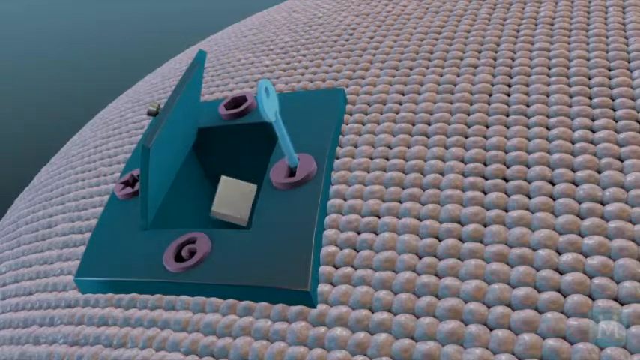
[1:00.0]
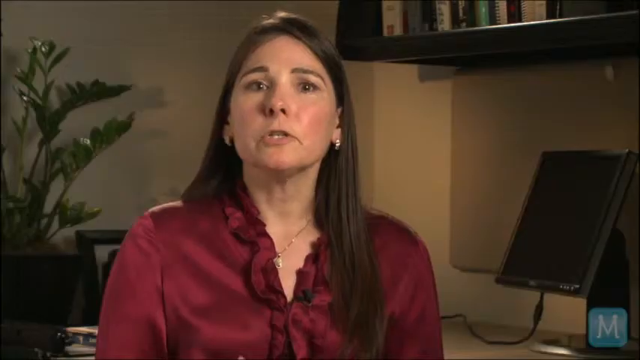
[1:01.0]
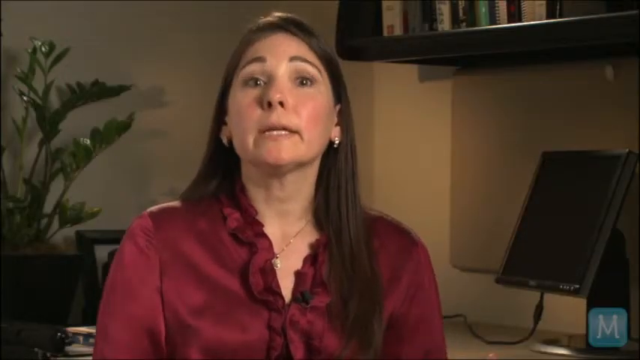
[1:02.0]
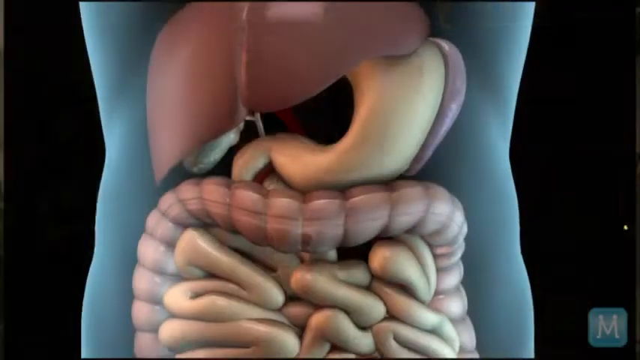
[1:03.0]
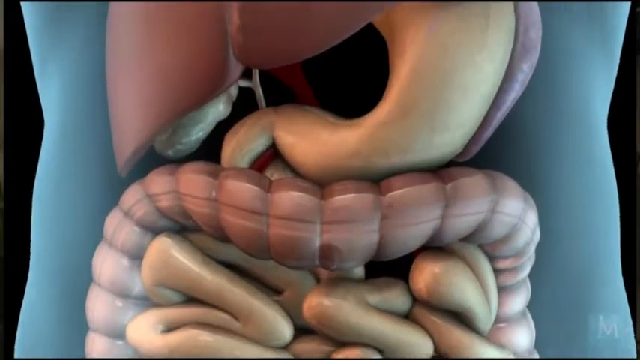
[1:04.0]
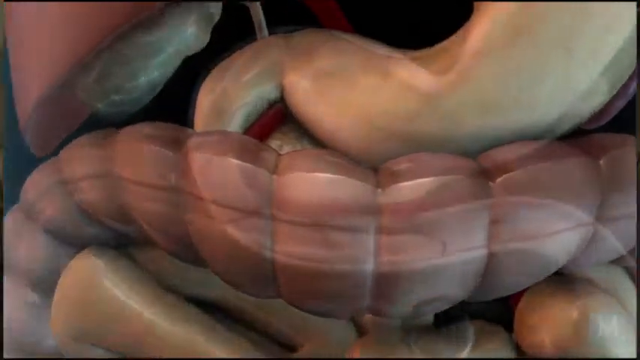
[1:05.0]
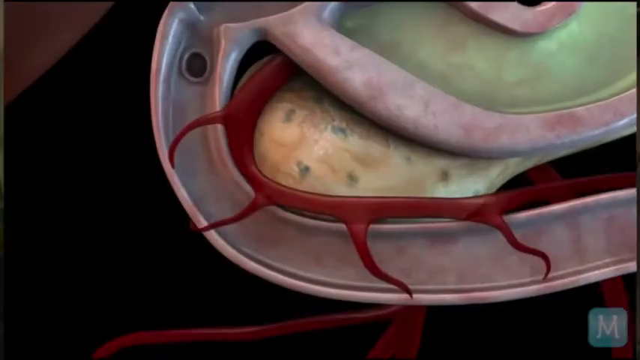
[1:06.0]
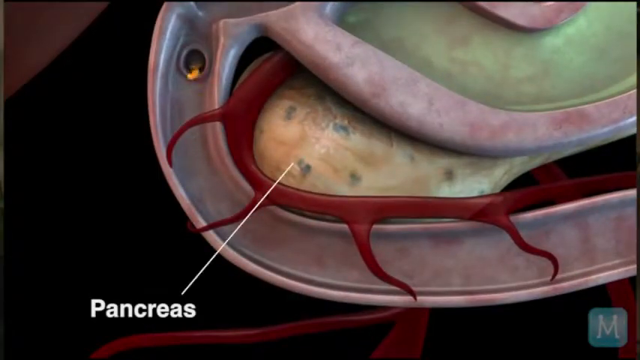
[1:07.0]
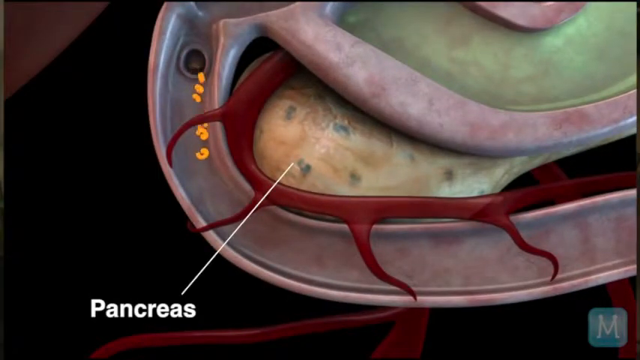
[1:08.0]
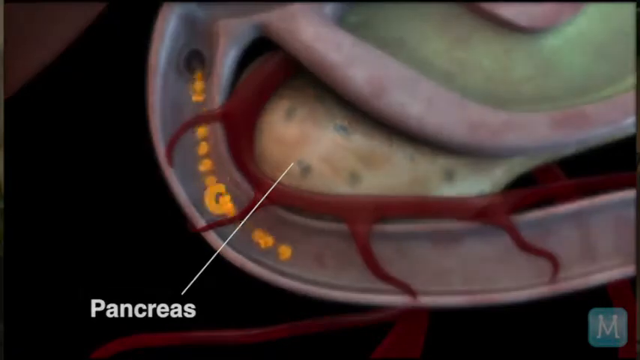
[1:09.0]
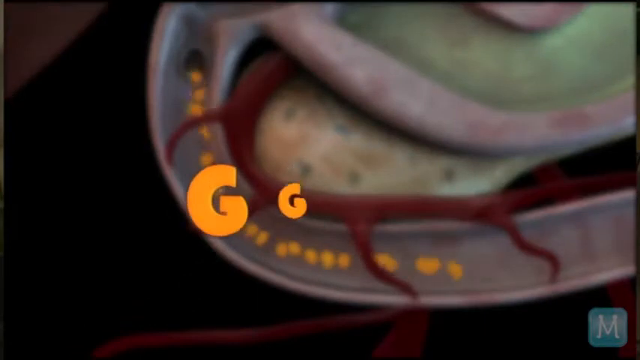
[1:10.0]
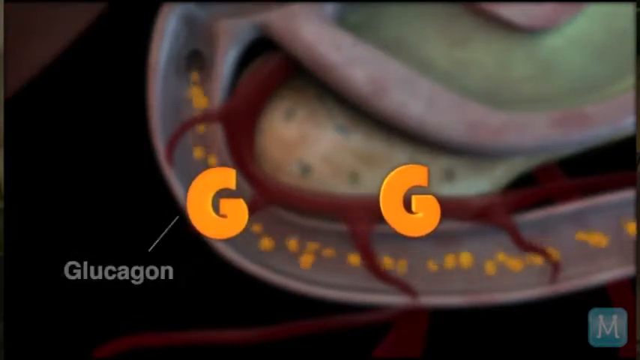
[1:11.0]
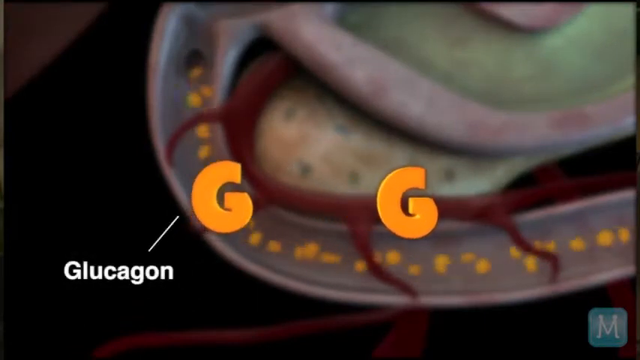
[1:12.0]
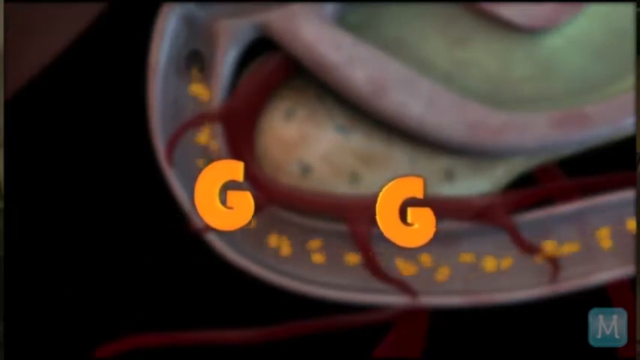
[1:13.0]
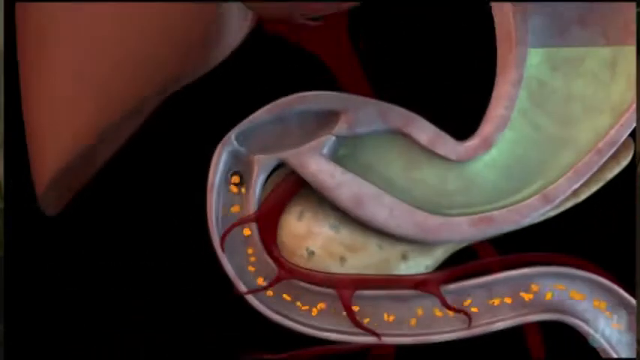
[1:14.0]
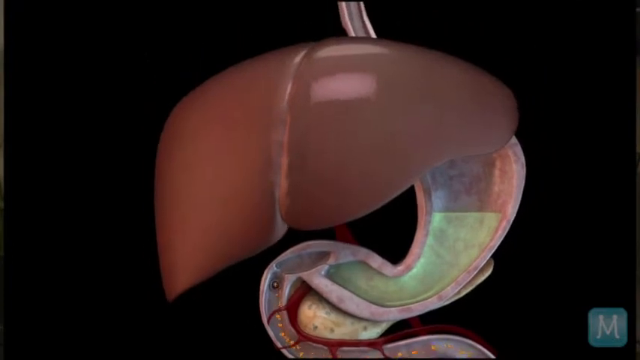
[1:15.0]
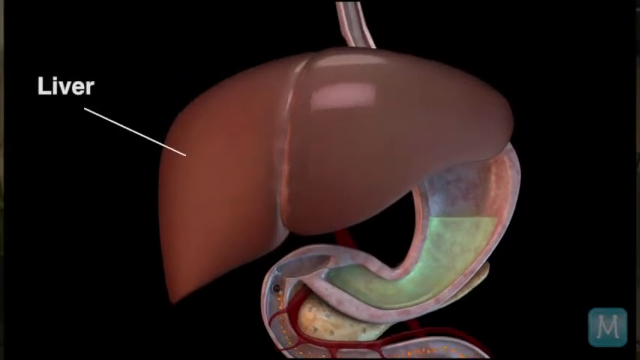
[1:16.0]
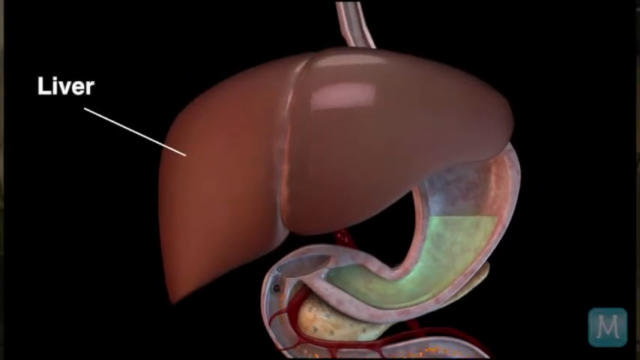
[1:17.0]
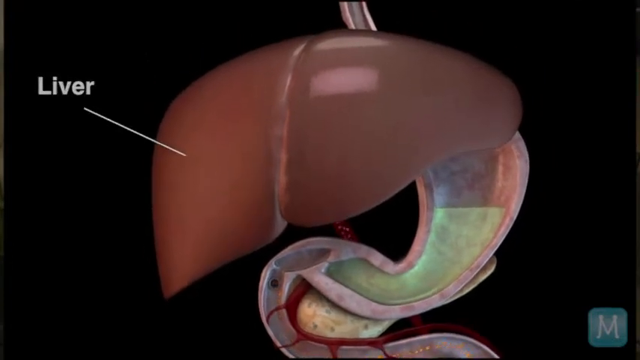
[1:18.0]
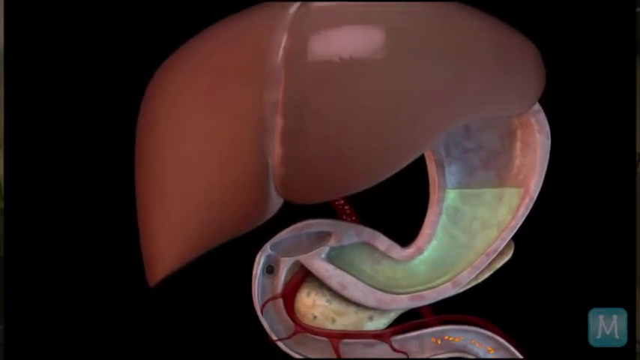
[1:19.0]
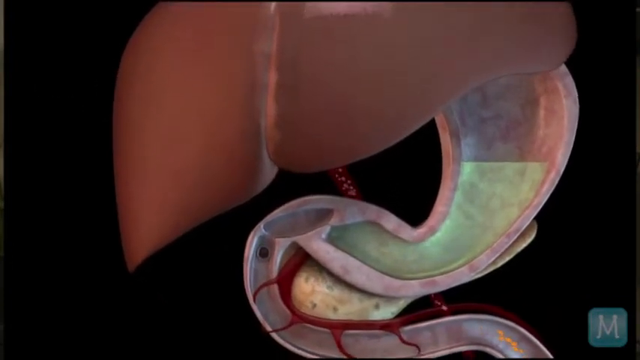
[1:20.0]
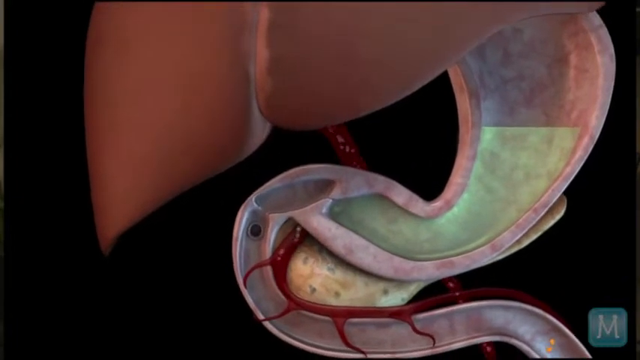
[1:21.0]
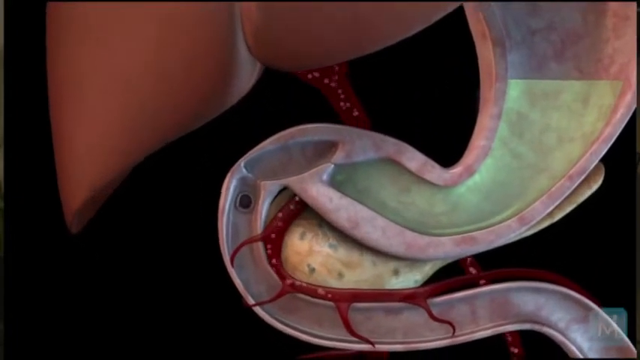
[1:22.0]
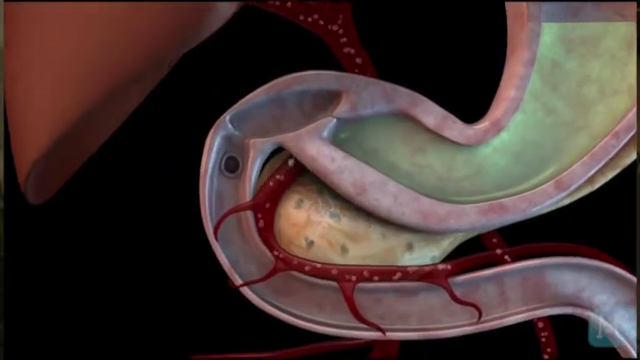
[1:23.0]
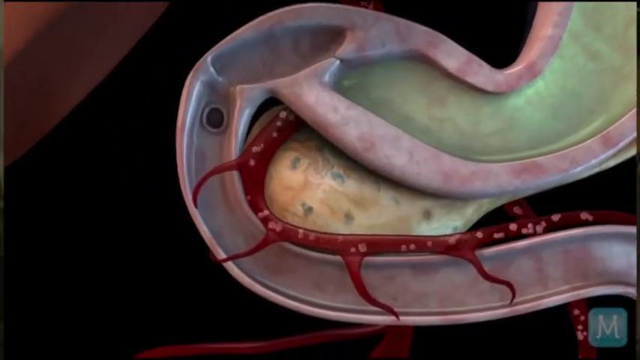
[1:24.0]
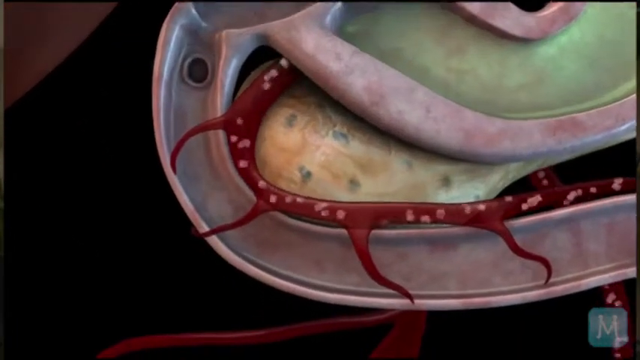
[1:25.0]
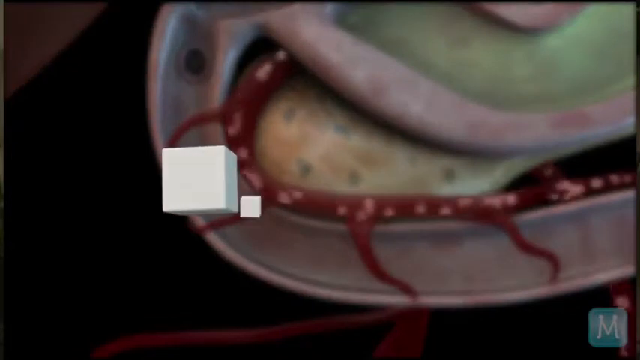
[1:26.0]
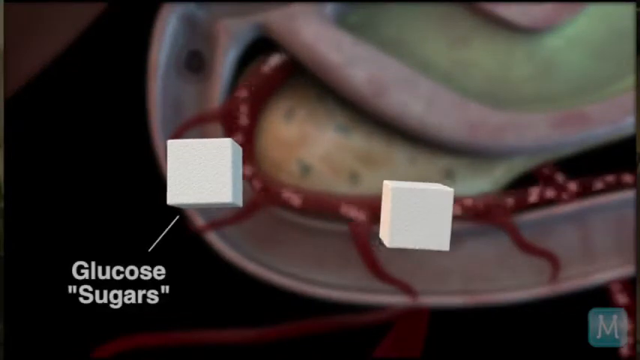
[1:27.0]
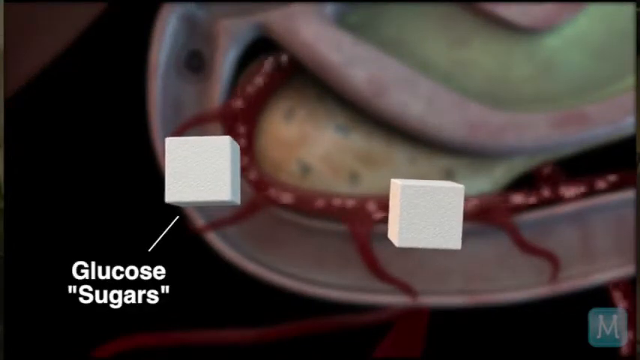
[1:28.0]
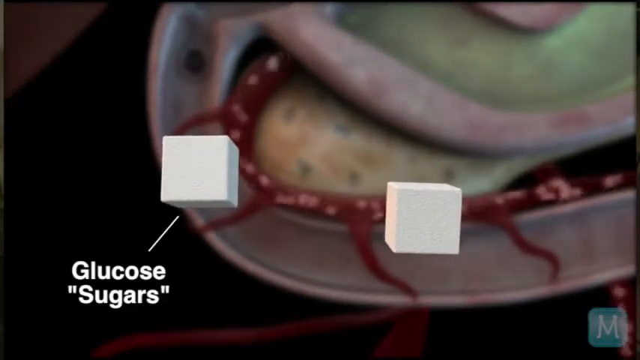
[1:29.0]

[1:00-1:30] What looks like some sort of sphere appears, and then what looks like a lock box. A blue key inside a lock unlocks the door, and white cubes go inside the open door. The video transitions to a woman talking to the camera, apparently inside an office. It then transitions to what looks like a computer-generated intestinal tract of a human, showing the stomach, the pancreas, and the large and small intestine. The view zooms and moves in, looking primarily at the pancreas and where it sits. Something like a yellow fluid comes in, shown with the letter G coming out and labeled glucagon; it looks like glucagon is going into the intestinal tract. The view then zooms out to the liver and points directly at it, and something moves through the liver that looks like blood or glucose going into the blood.